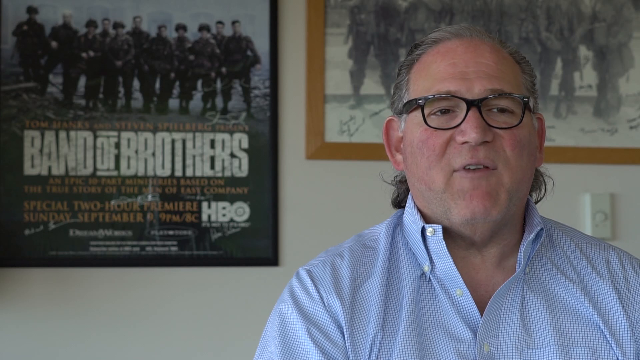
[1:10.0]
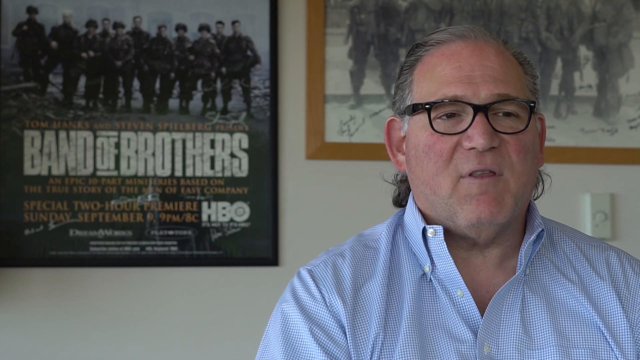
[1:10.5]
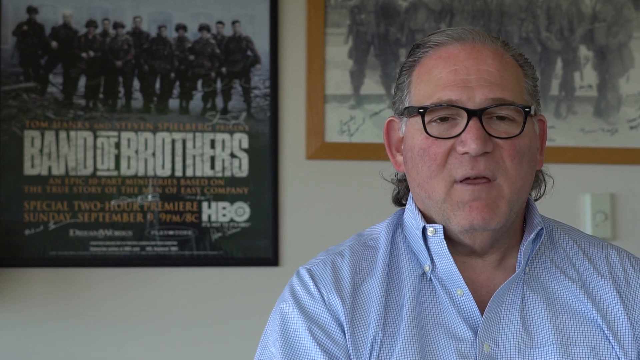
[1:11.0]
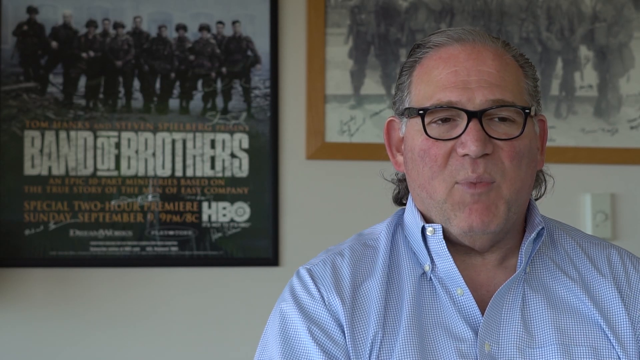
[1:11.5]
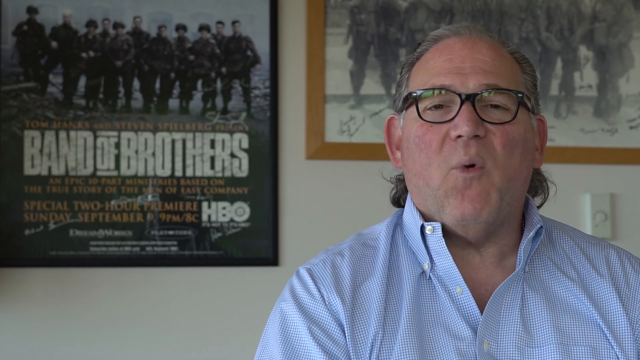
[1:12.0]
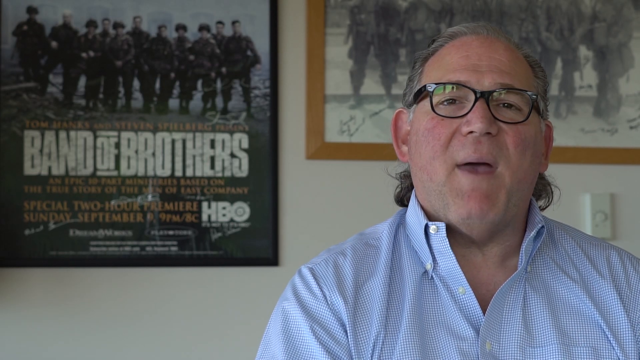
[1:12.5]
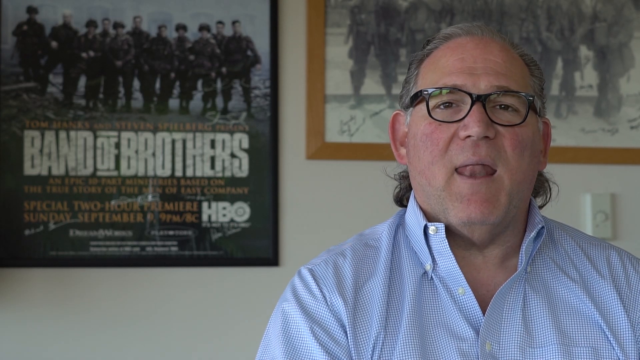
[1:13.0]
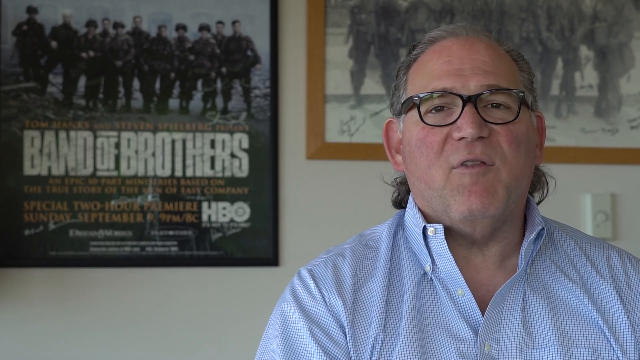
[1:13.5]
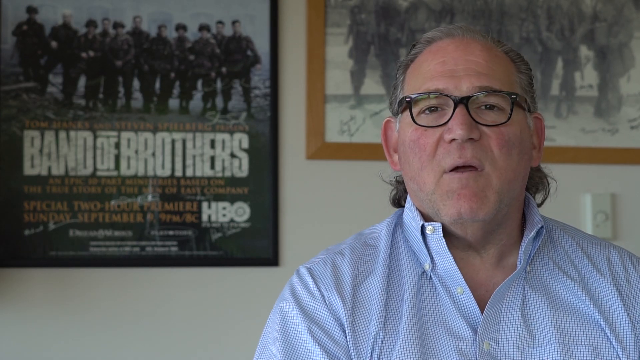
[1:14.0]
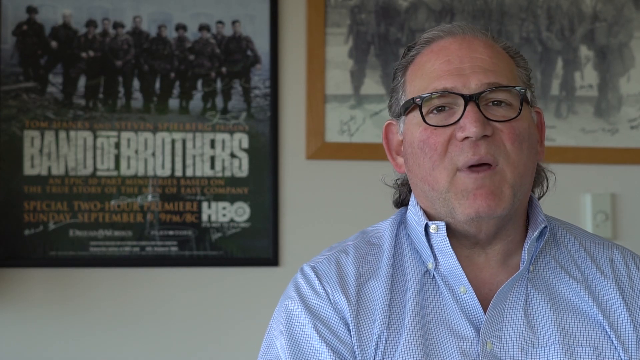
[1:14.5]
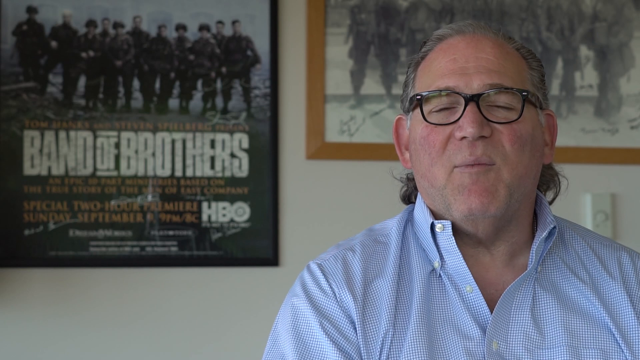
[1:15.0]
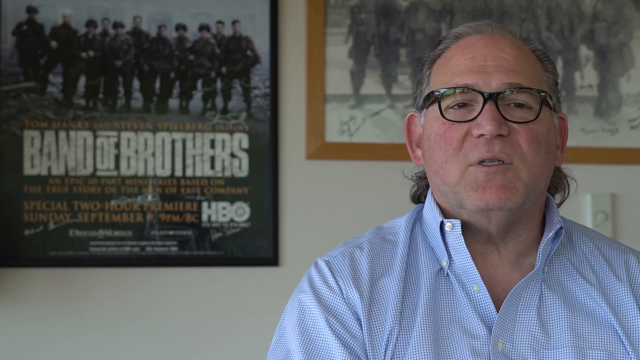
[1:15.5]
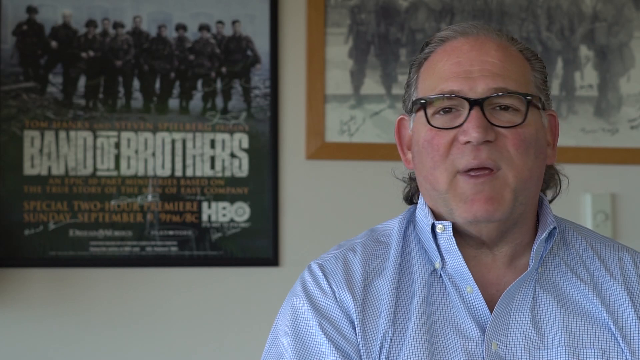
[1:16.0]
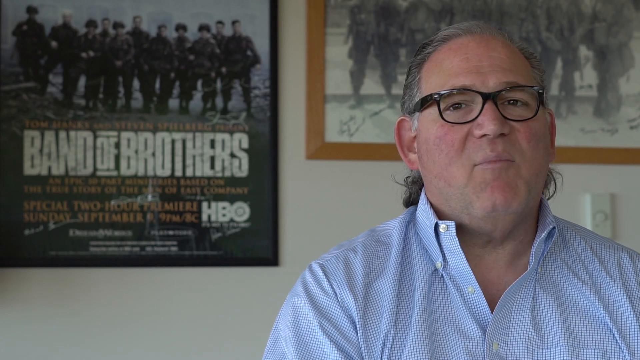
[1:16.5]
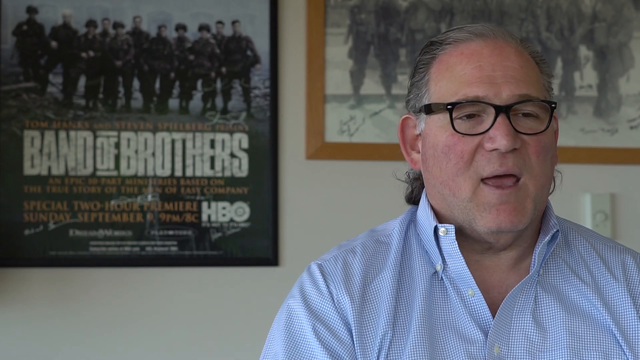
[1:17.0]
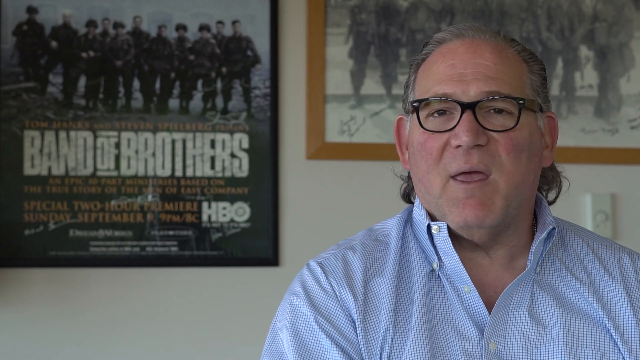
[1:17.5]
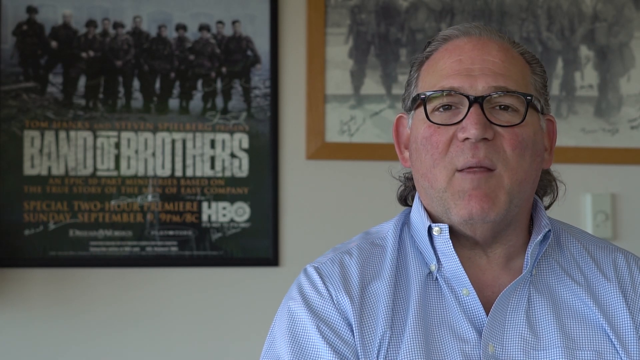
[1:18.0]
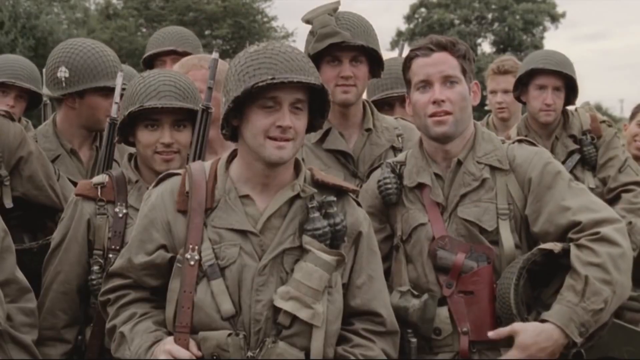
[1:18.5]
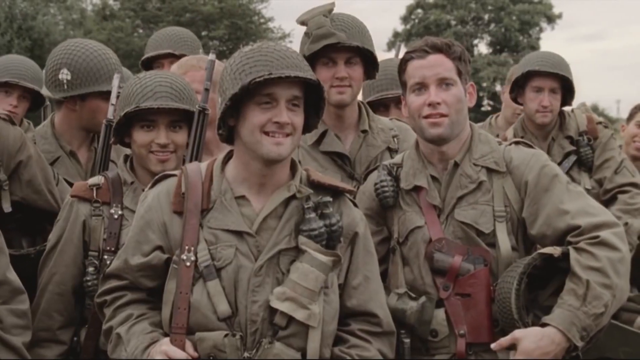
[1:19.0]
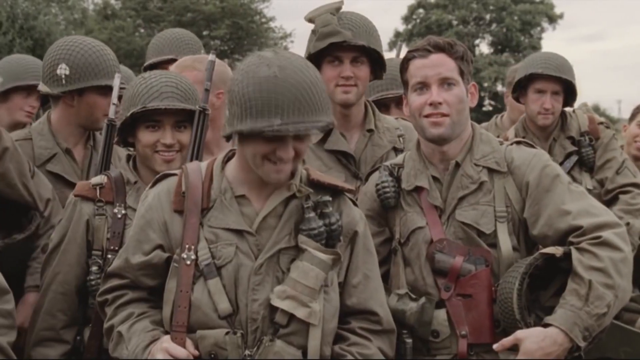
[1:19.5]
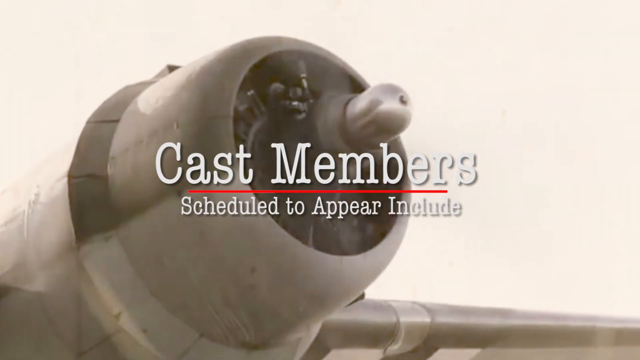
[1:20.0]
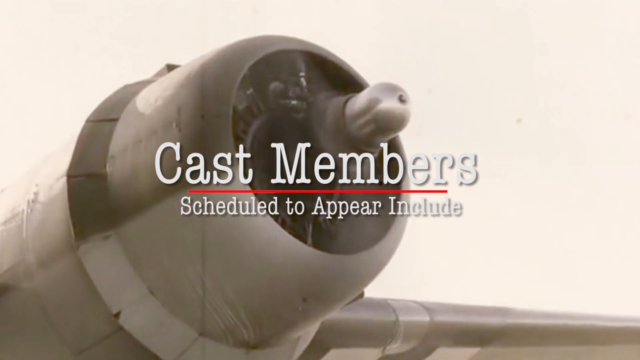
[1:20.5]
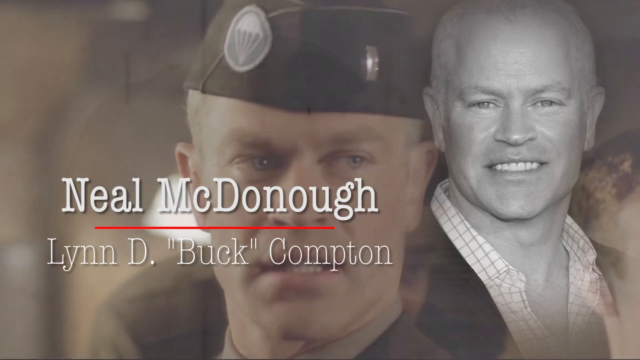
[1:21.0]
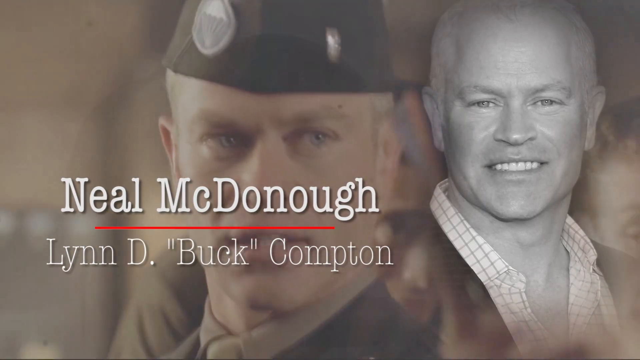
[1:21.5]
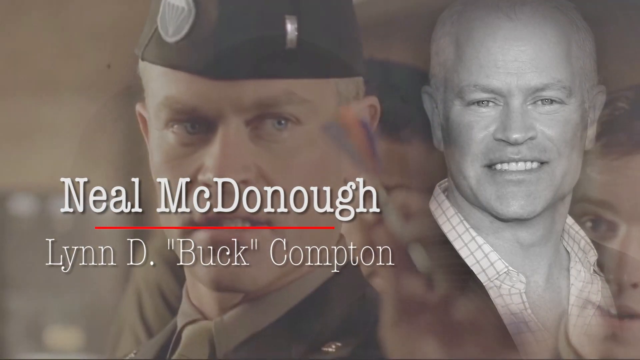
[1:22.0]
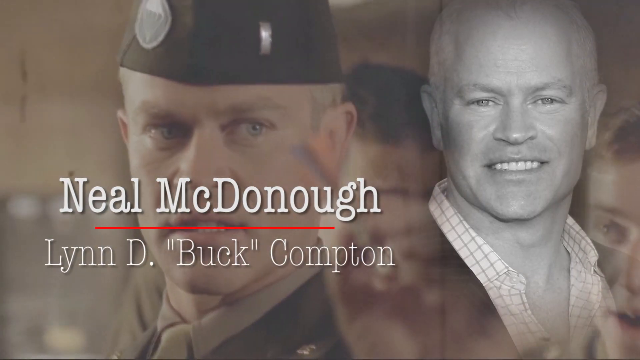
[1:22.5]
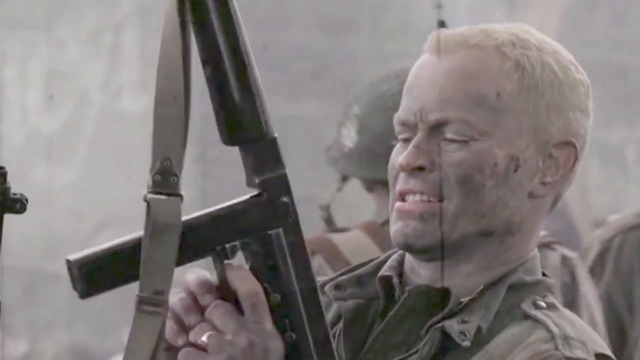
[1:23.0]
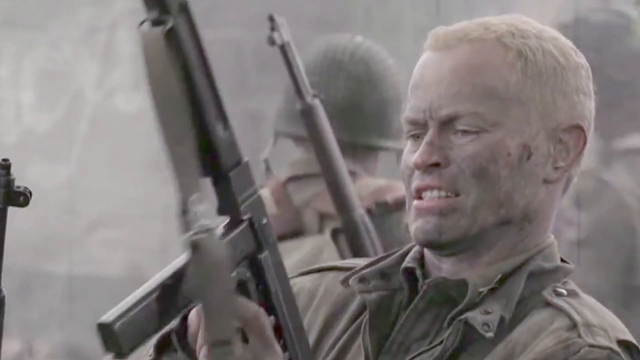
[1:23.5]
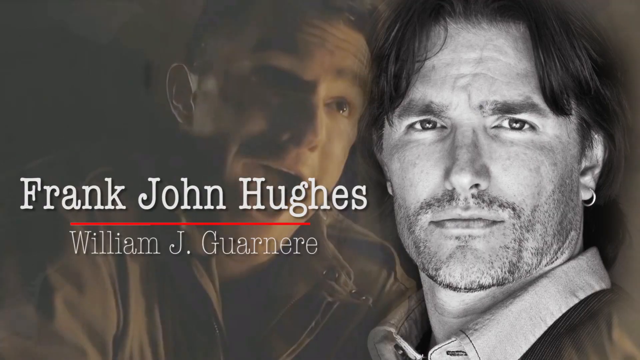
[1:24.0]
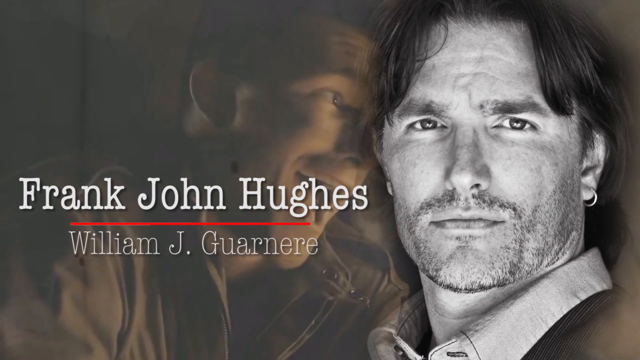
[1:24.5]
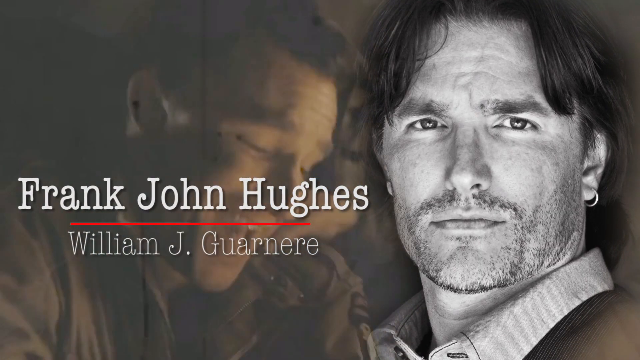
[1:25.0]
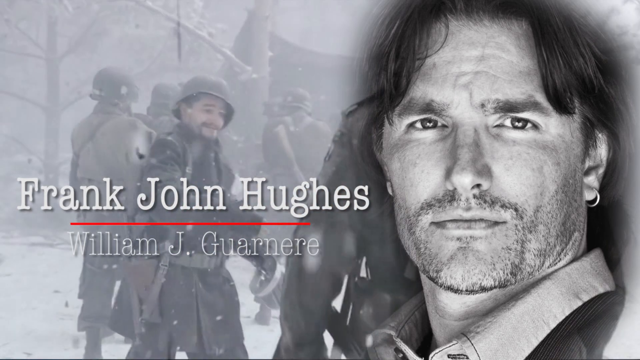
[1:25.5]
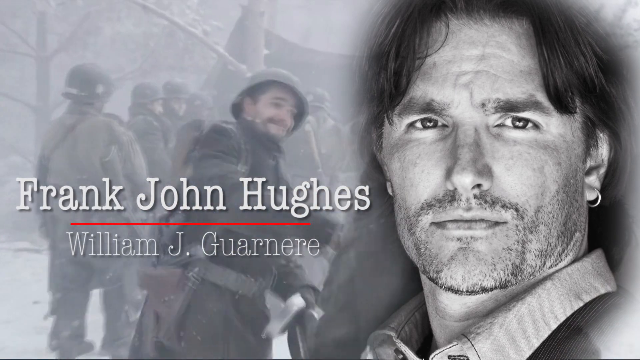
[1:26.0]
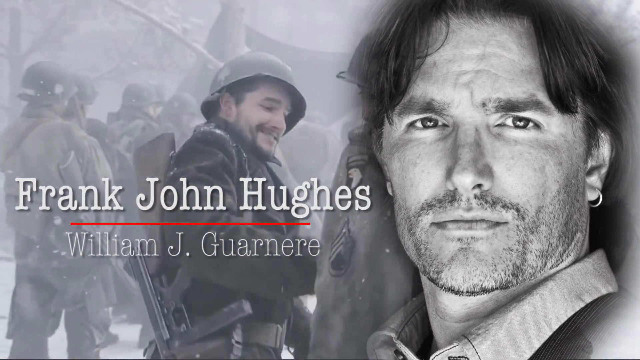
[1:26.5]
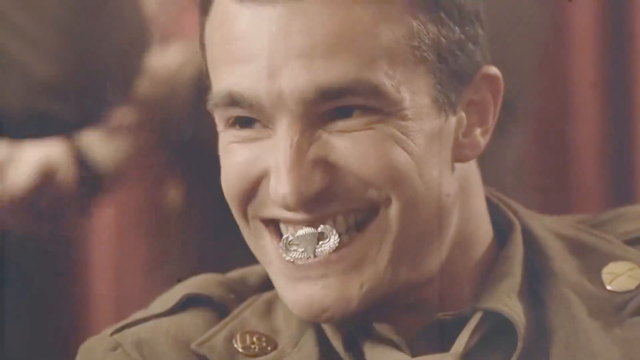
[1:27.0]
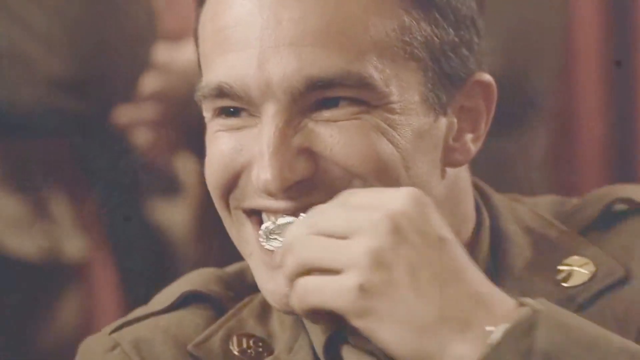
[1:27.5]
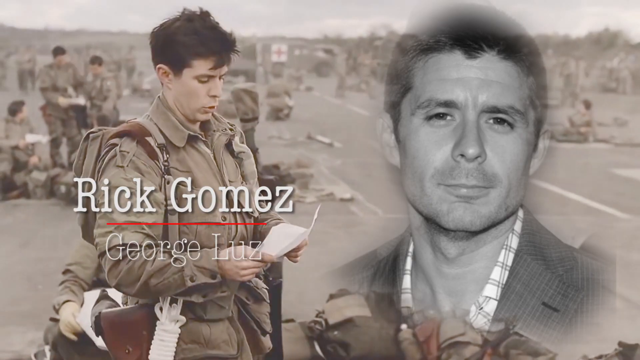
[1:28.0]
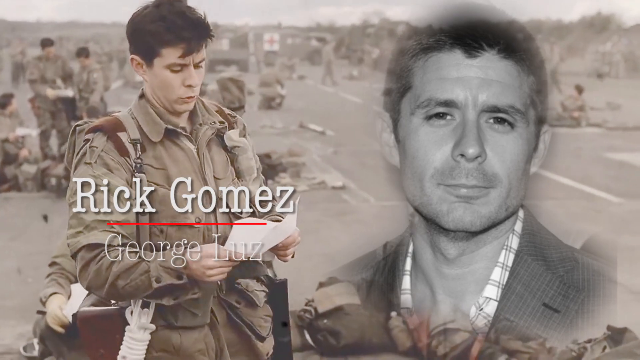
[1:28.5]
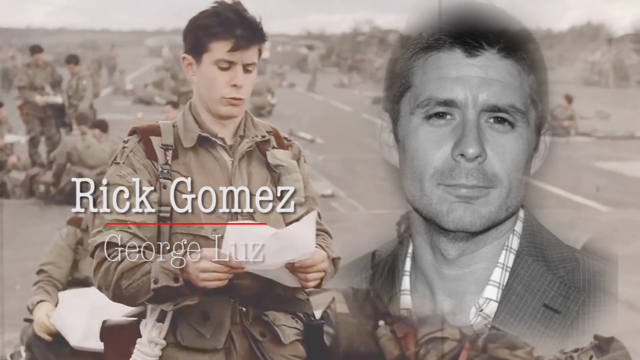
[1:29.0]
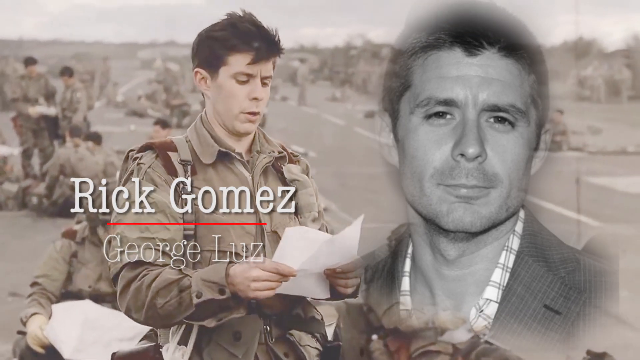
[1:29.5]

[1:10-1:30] A man is interviewed, talking to the camera, with a board or placard on the wall behind him to his right. Soldiers are shown outside in a scene possibly from the movie, with gray skies and trees in the background; they smile and hold their guns and grenades. An airplane is shown with its engine running. Cast members scheduled to appear are named: Neil McDonough, Frank John Hughes and Rick Gomez. The man in the blue shirt and black sunglasses might be the director or producer of the movie.